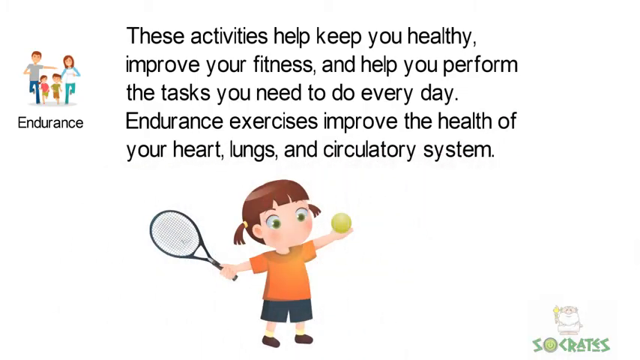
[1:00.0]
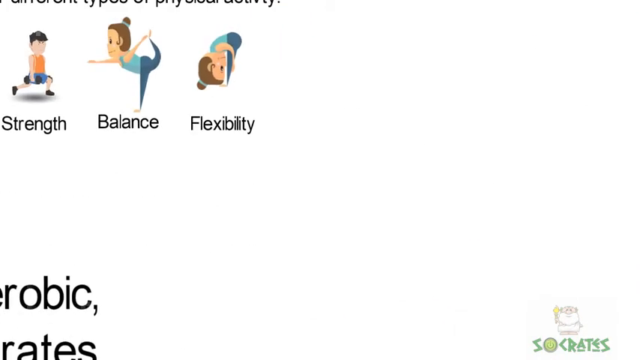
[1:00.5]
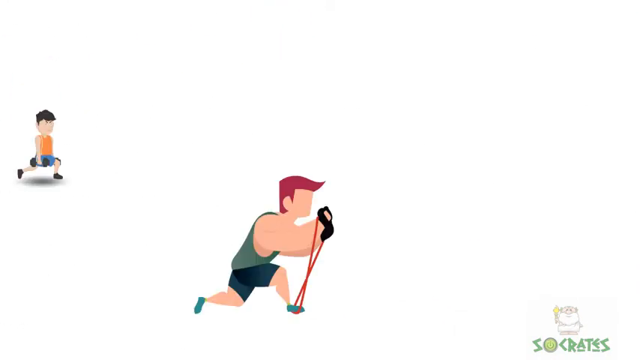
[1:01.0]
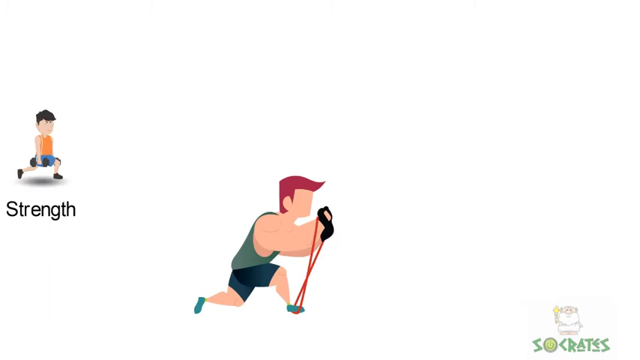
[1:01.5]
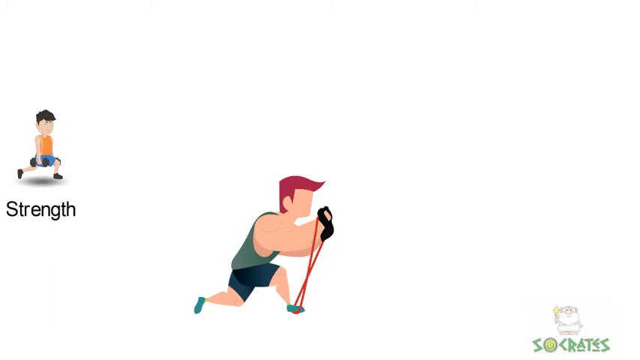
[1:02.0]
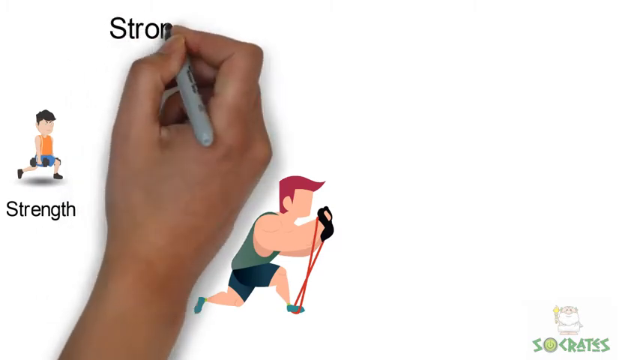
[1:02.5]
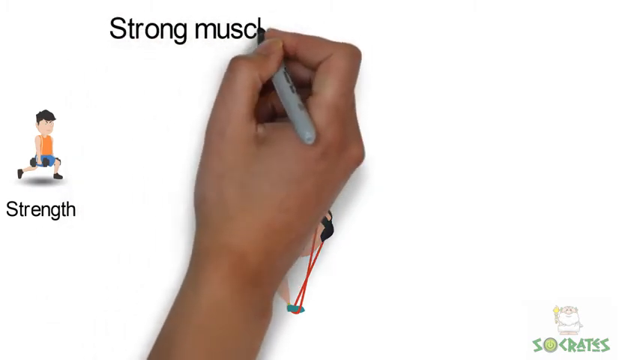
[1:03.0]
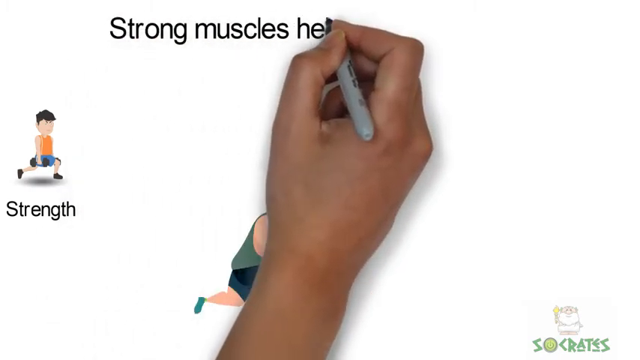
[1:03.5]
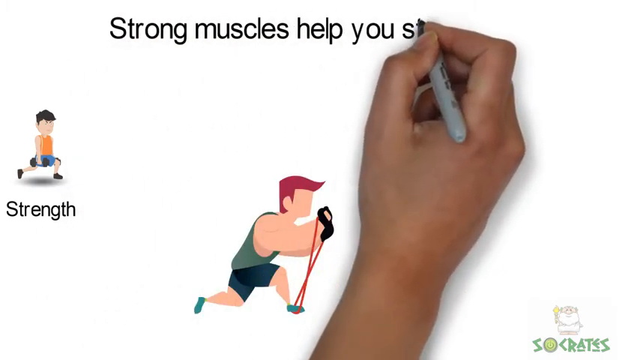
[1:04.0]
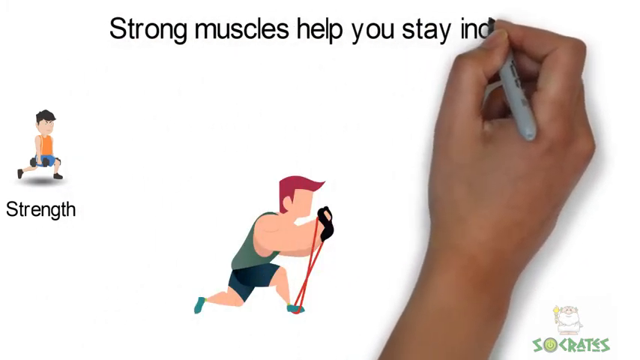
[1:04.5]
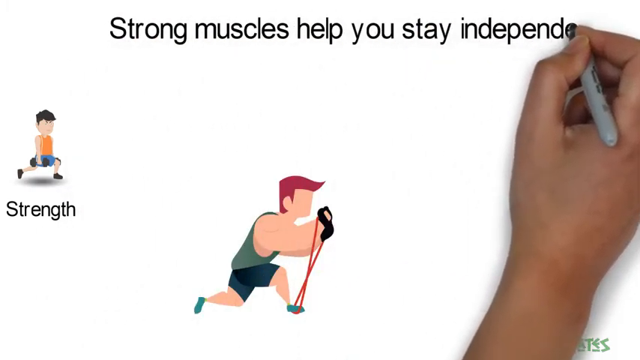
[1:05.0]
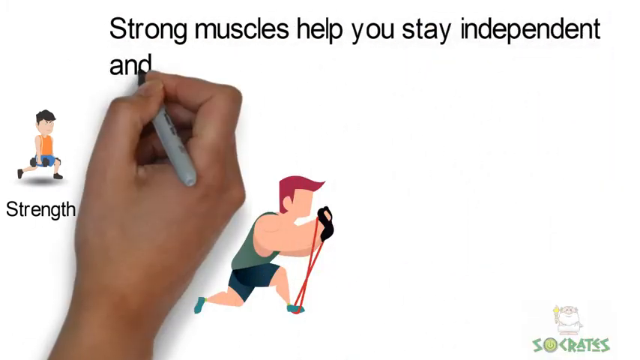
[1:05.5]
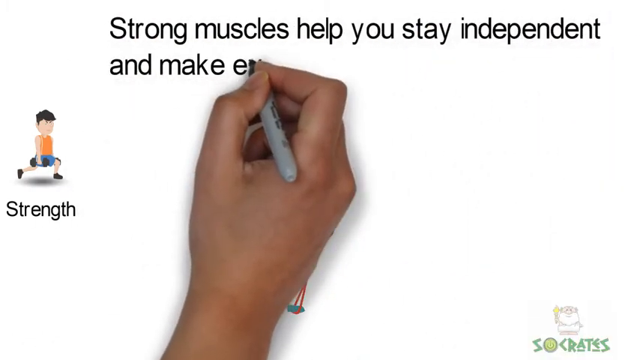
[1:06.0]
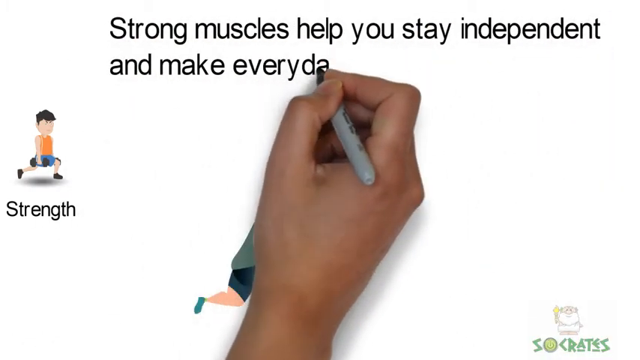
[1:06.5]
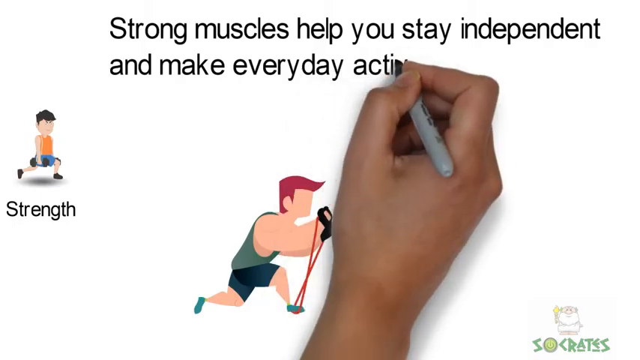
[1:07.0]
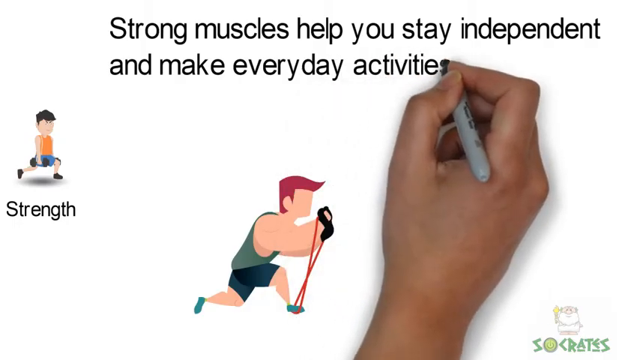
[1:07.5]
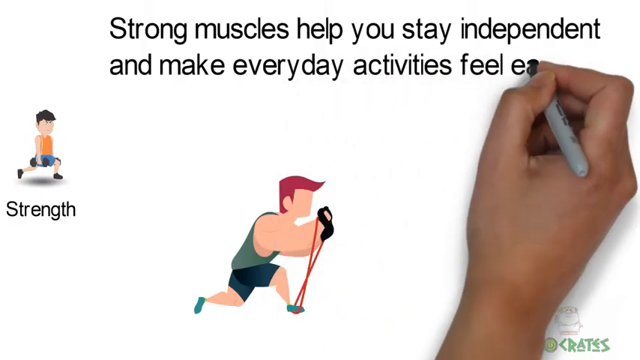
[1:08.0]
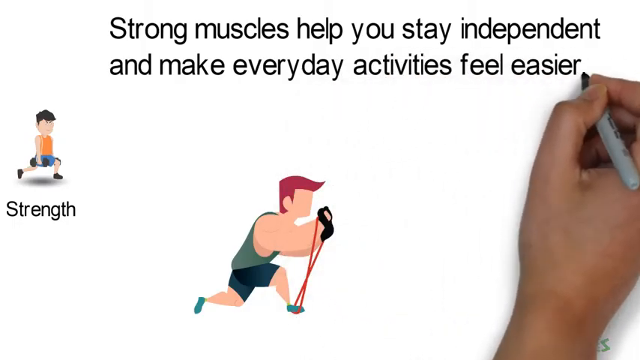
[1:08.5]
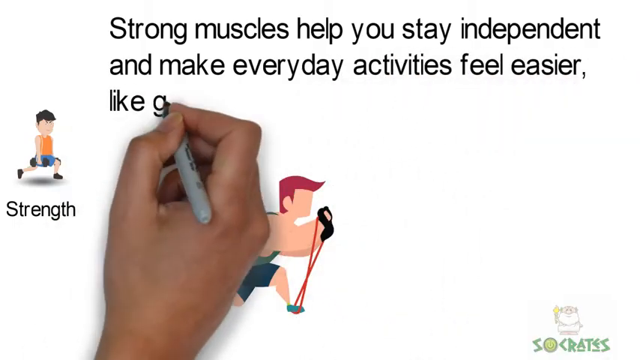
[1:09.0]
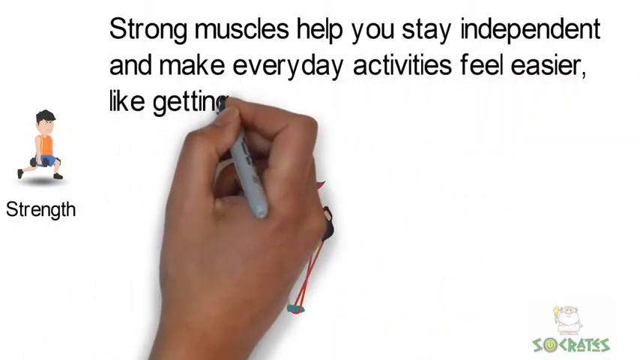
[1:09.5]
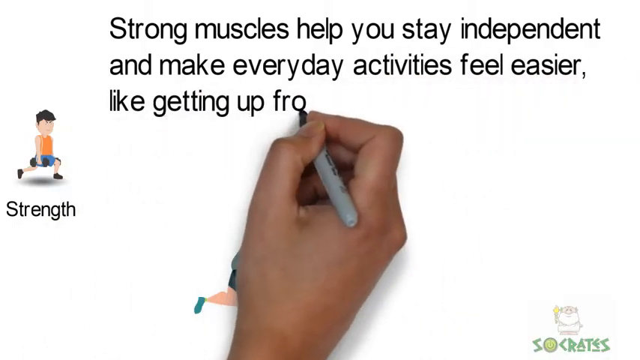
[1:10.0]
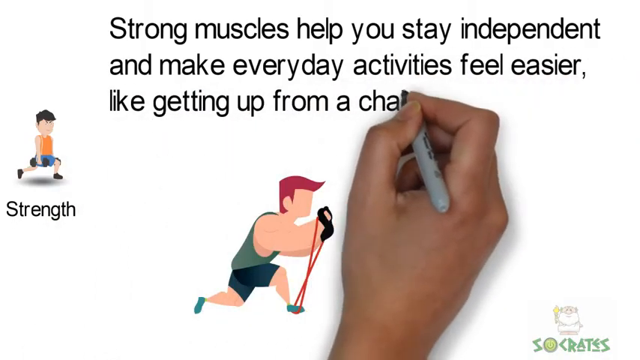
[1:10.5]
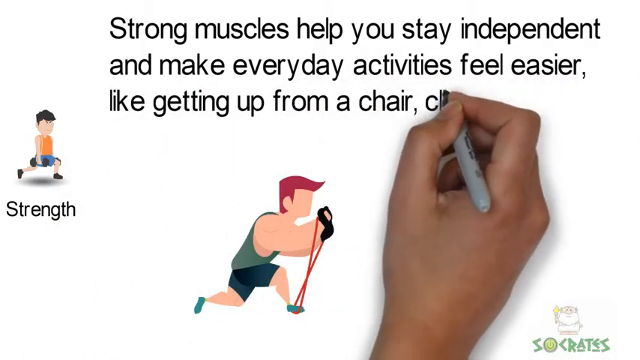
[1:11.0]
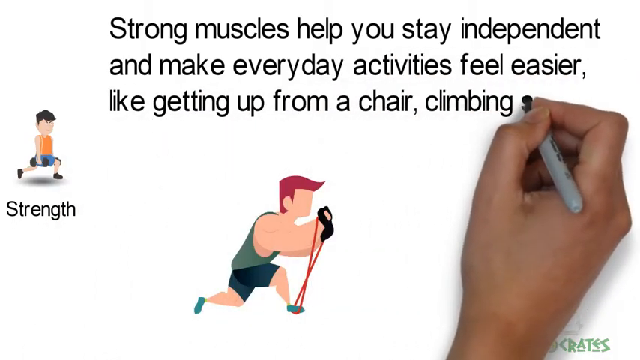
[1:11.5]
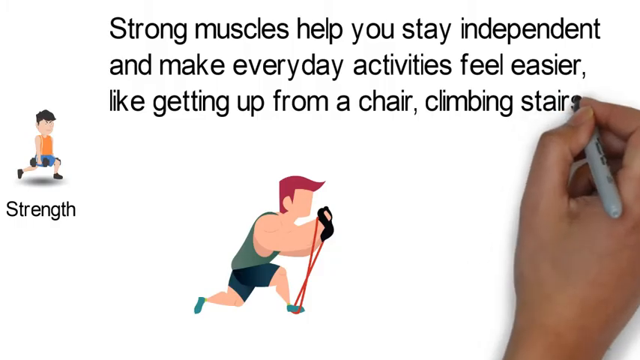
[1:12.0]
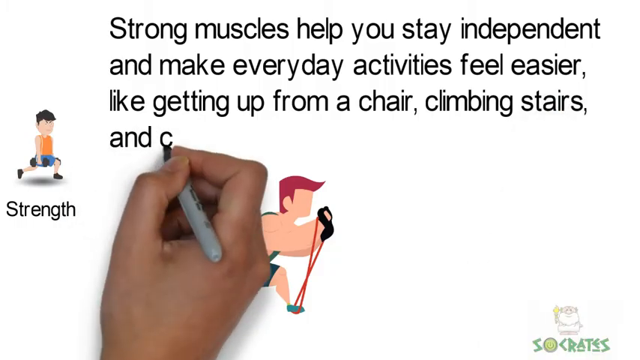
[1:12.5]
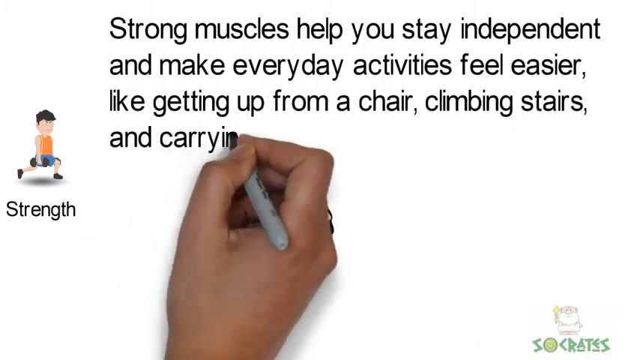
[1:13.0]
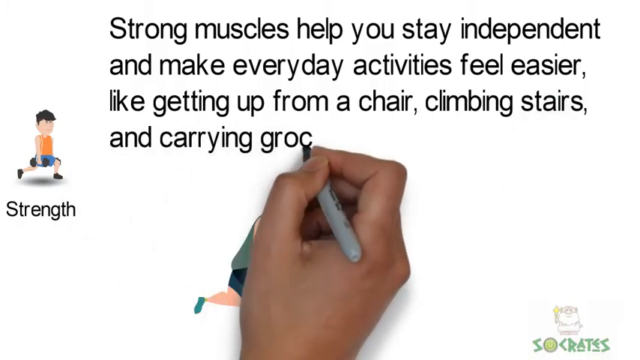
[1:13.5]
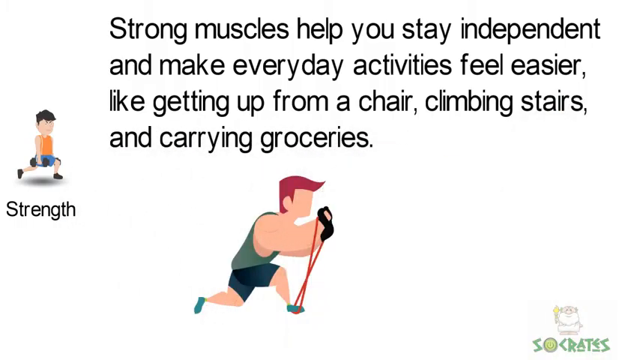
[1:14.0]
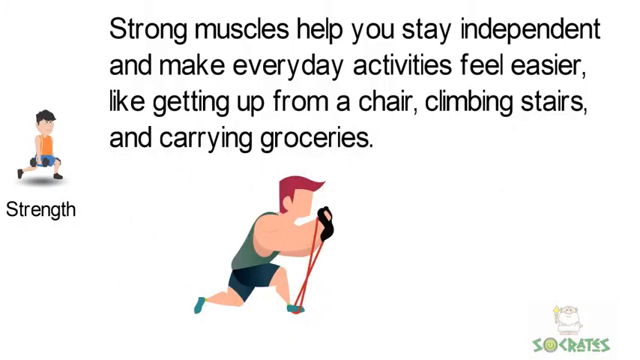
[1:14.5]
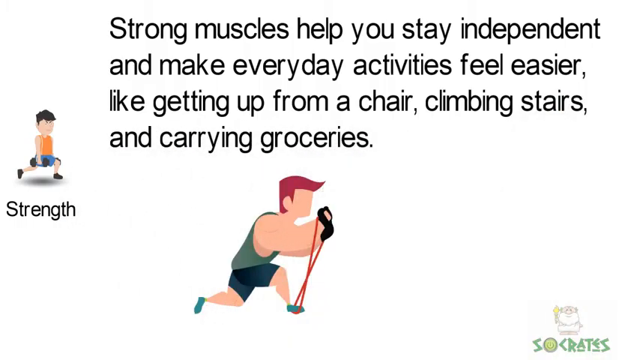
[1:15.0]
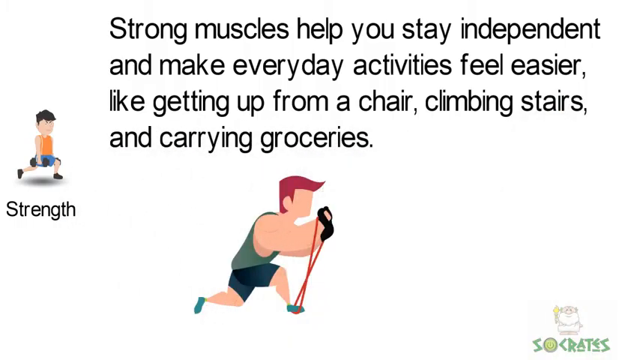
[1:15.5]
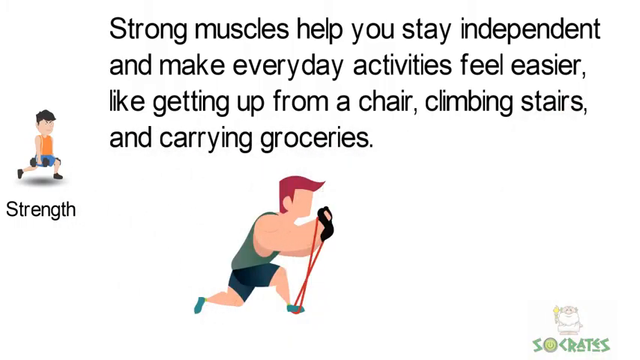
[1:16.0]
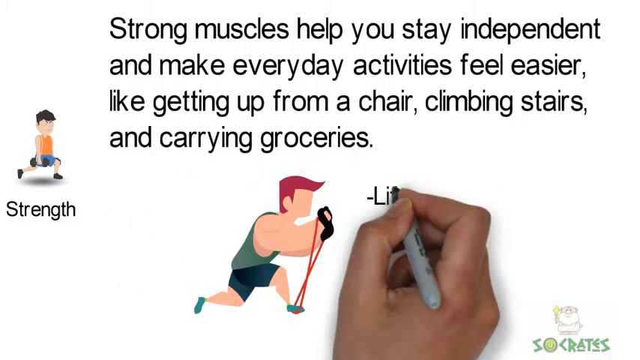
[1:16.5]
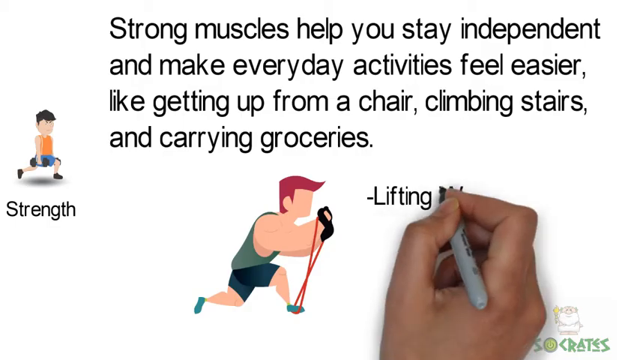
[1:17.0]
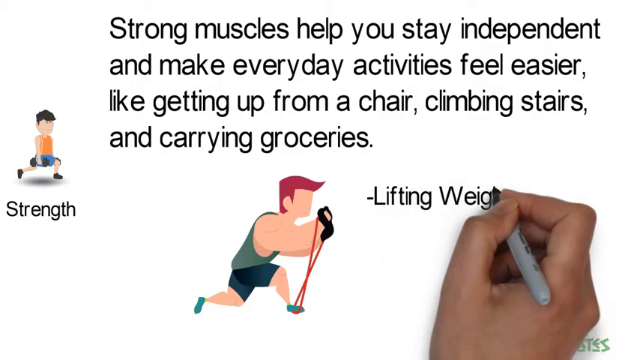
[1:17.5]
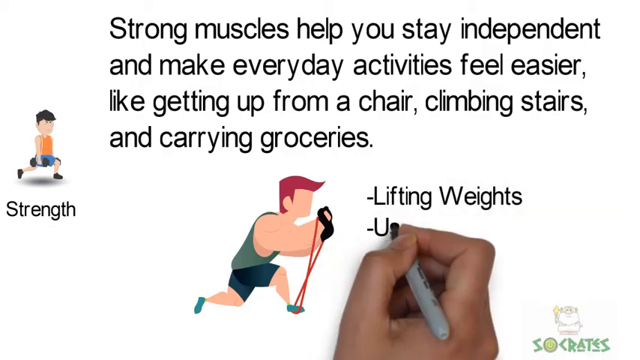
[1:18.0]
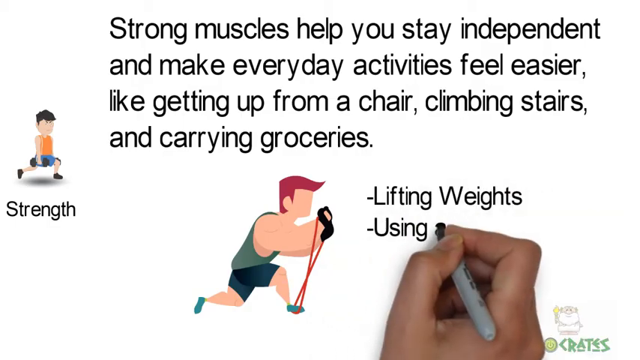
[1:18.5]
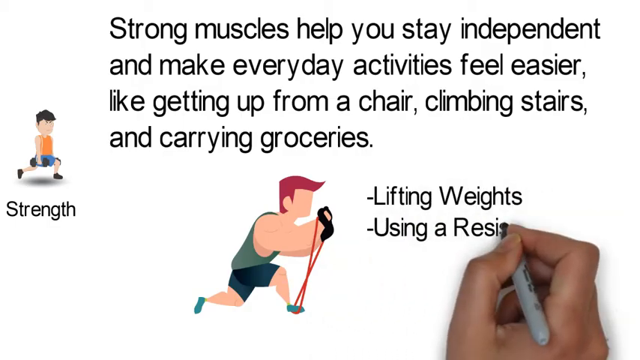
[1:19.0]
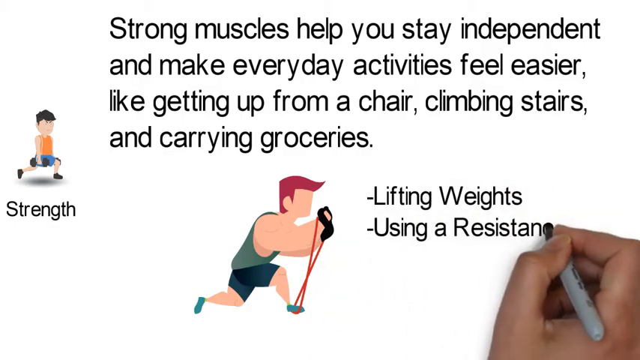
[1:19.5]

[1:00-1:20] On the white screen, black text at the top reads "these activities help keep you healthy, improve your fitness, and help you perform the tasks you need to do every day. Endurance exercises improve the health of your lungs, your heart, and circulatory system." That goes away, and a hand holding a gray Sharpie marker with a black tip writes in black along the top: "strong muscles help you stay independent and make everyday activities feel easier like getting up from a chair, climbing stairs, and carrying groceries." Underneath is a cartoon man with flipped-up orange hair and no face, wearing a green tank top and blue shorts. He has a rubber band under his right foot and stretches it up with both hands in front of him. The hand comes back and writes in front of the man: "lifting weight, using a resistance band."